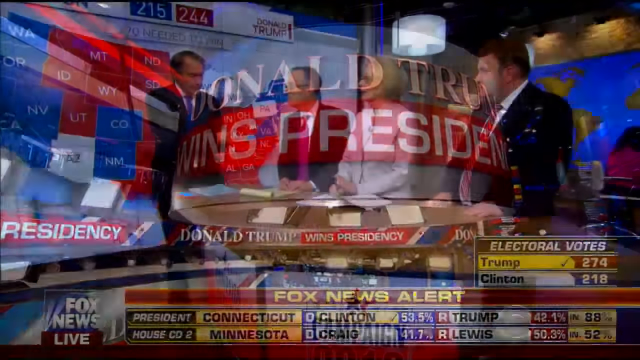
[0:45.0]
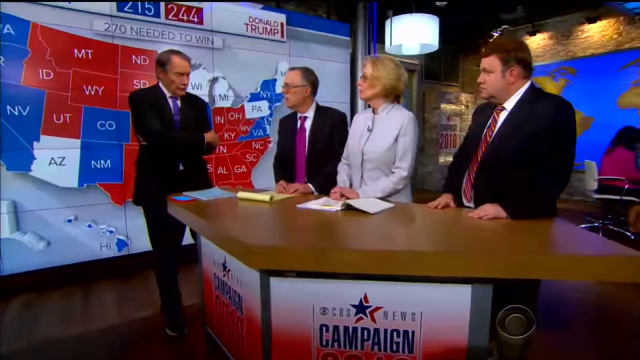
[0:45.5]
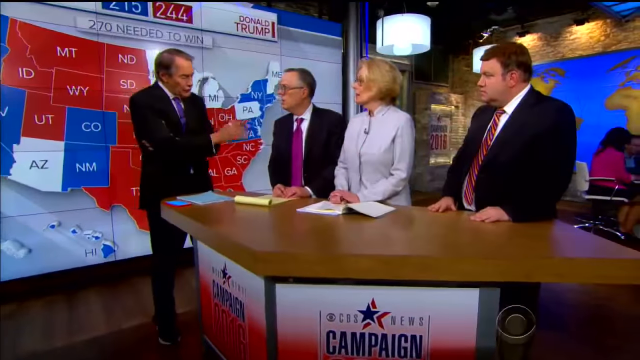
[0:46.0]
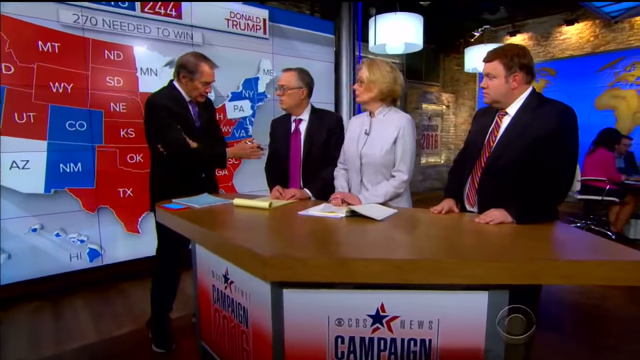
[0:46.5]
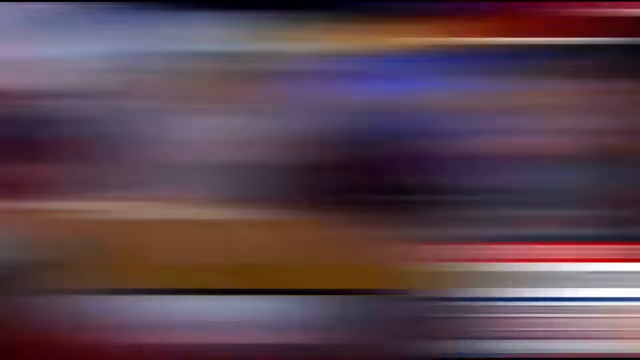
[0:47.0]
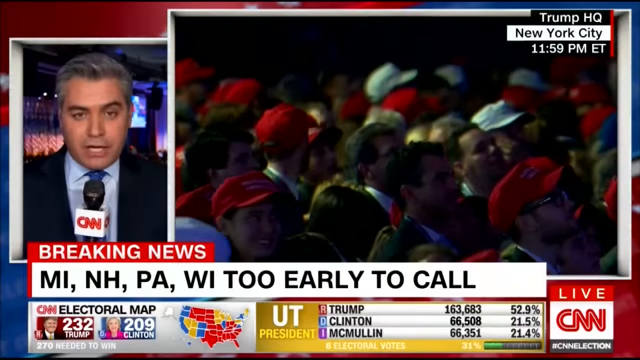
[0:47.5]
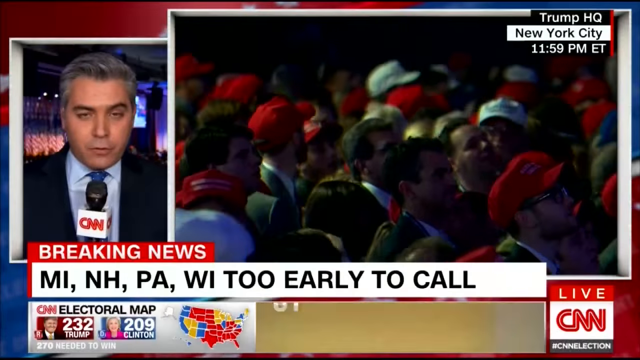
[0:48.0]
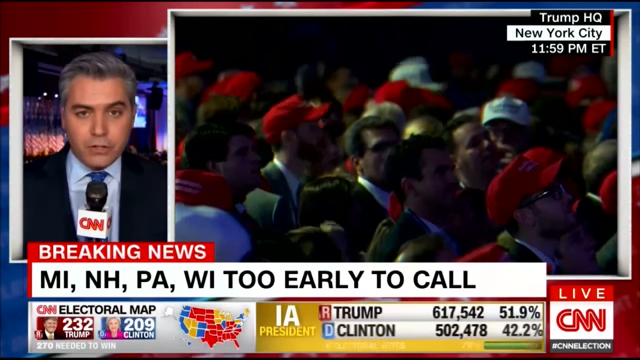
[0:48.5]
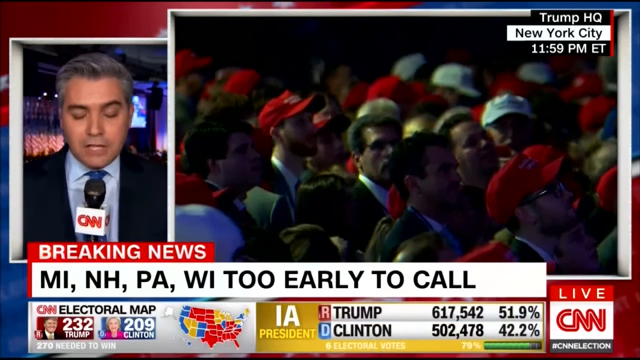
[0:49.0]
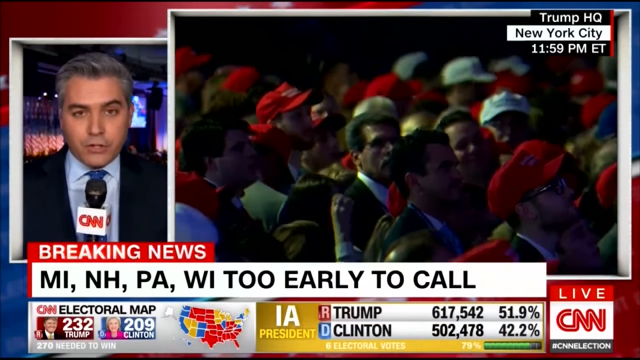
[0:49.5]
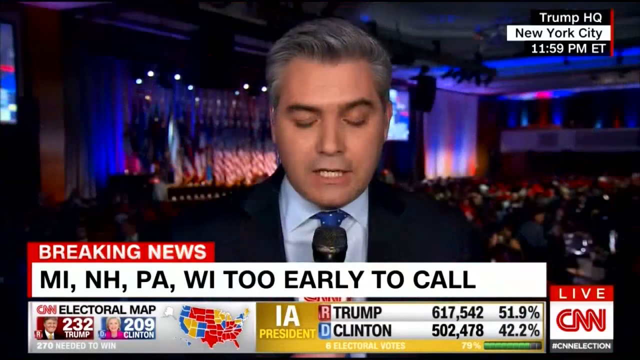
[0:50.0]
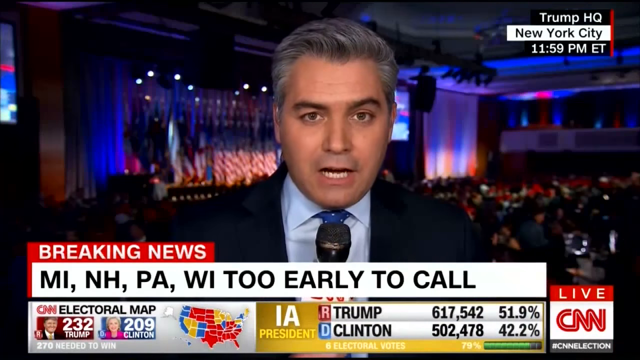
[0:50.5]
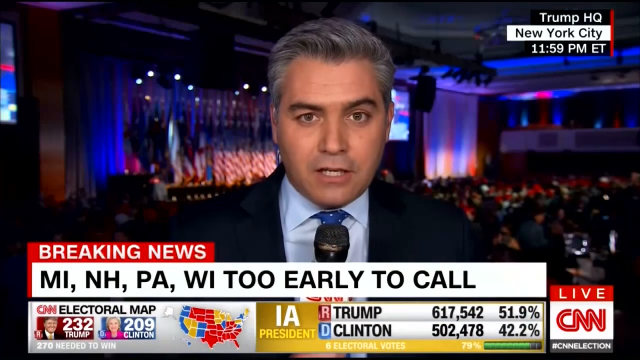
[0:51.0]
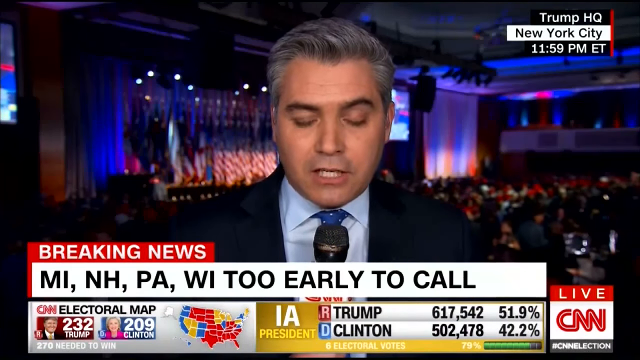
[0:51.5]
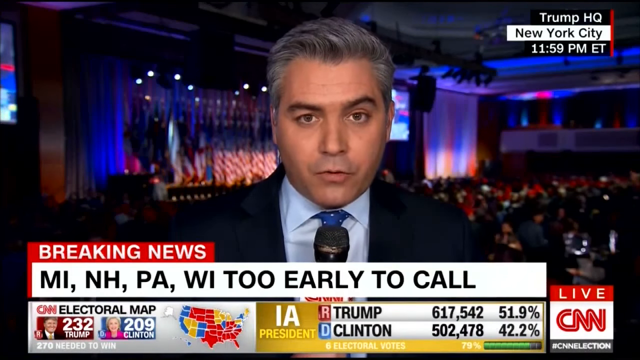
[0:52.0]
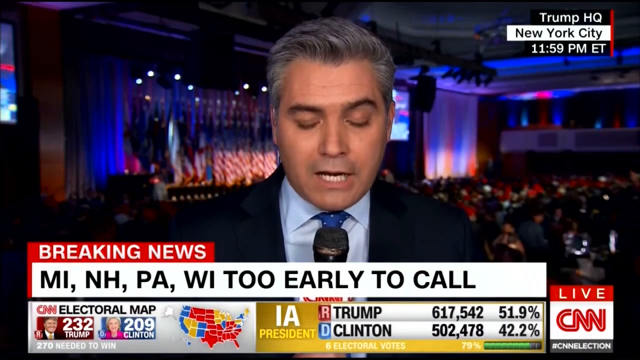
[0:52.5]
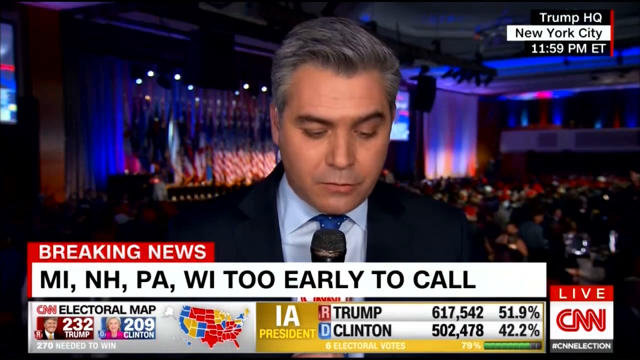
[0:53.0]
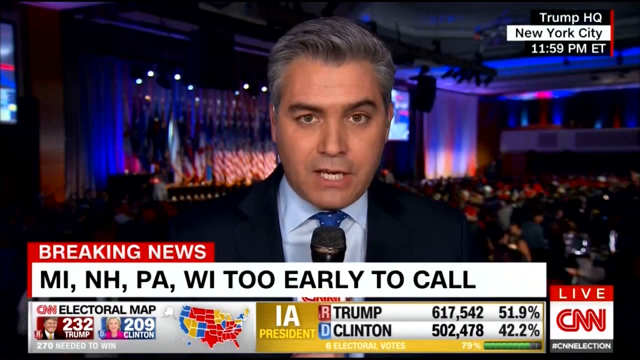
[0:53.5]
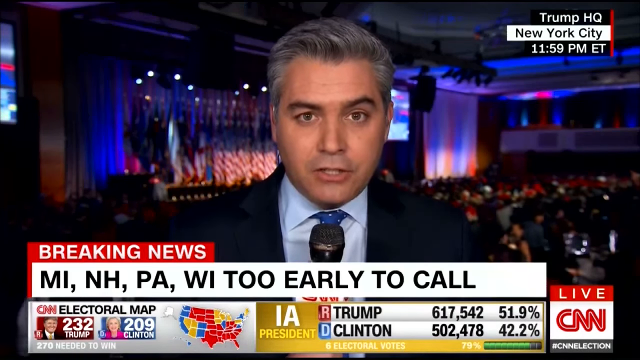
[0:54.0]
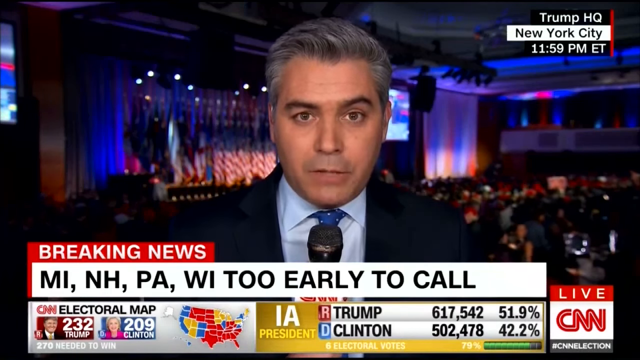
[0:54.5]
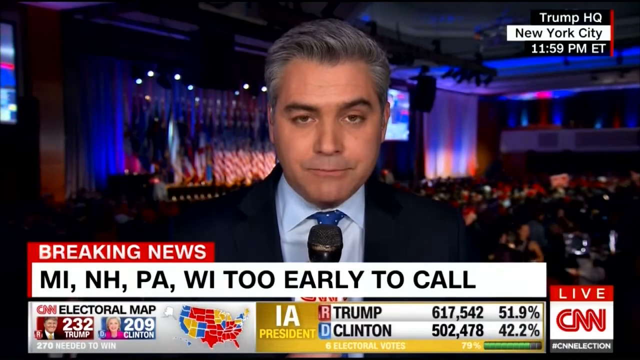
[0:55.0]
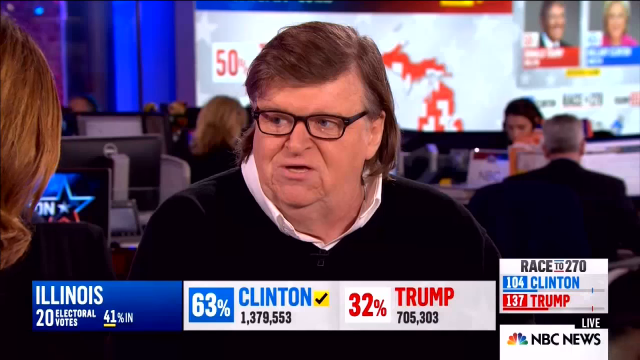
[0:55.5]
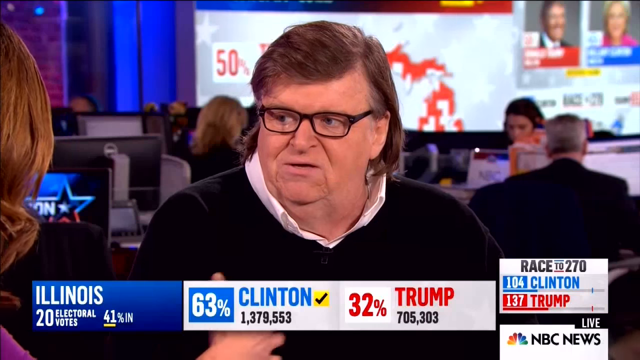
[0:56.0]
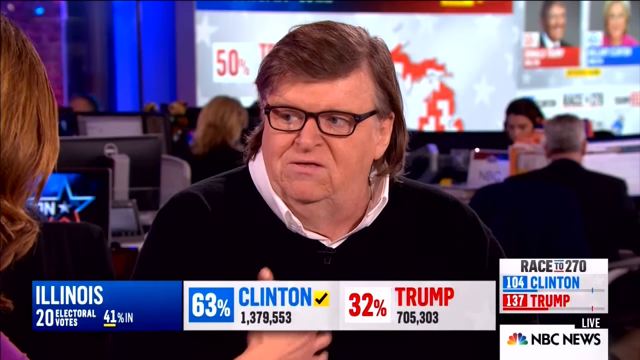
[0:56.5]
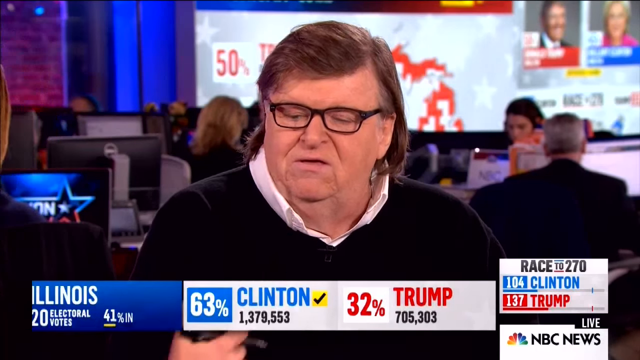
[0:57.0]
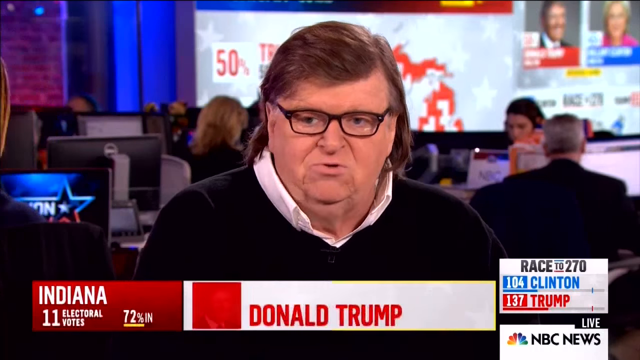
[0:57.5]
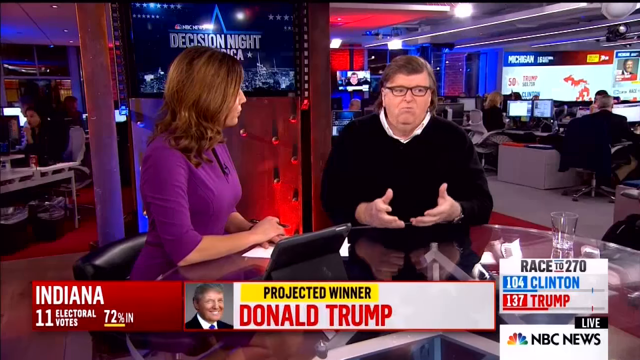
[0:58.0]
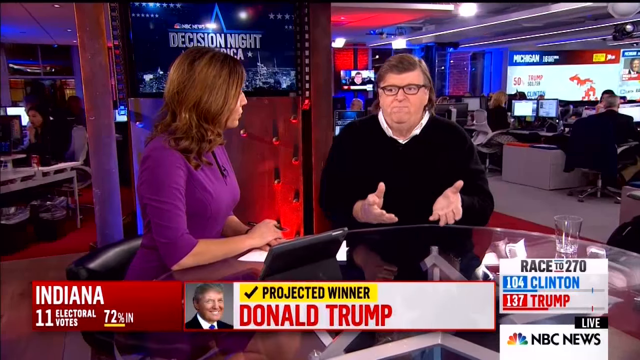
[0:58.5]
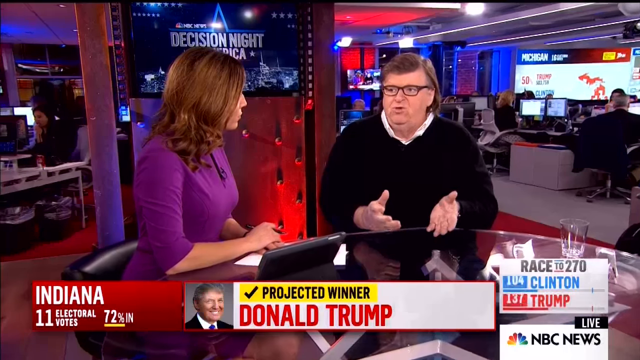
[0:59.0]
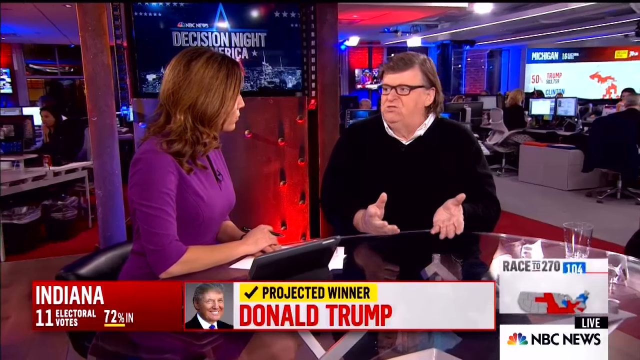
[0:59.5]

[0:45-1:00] The Inside Edition segment shows footage of different rallies during election night. A headline at the bottom reads "Breaking News" and shows four states that are too early to call. An interviewer with a CNN microphone speaks in front of the camera, kind of perched over some sort of rally, possibly Clinton's or Trump's. He looks right at the camera and has grayish hair and a blue tie. The video switches back to the newsroom, where an older white man with longish brown hair and glasses is being interviewed. Text at the bottom reads "Indiana projected winner Donald Trump."